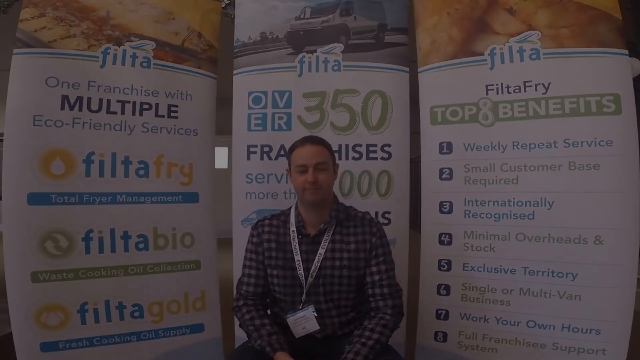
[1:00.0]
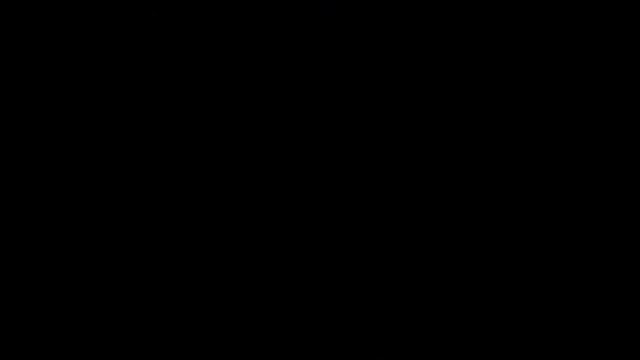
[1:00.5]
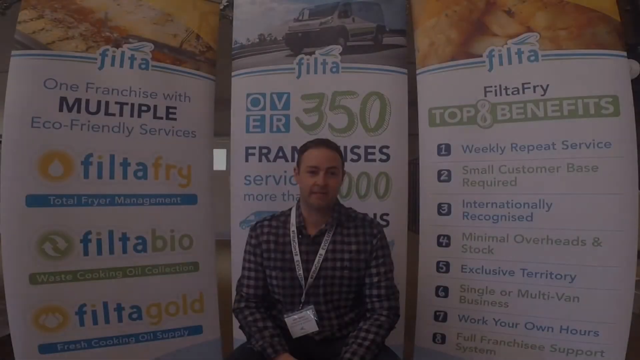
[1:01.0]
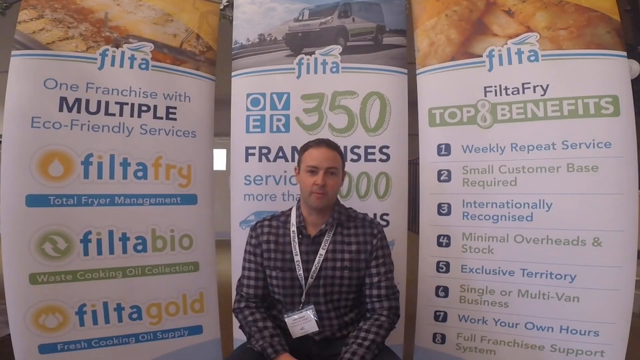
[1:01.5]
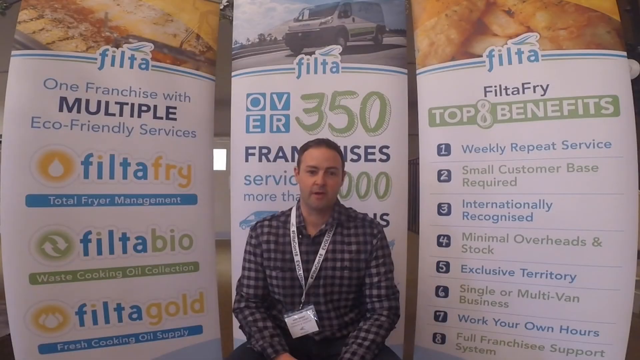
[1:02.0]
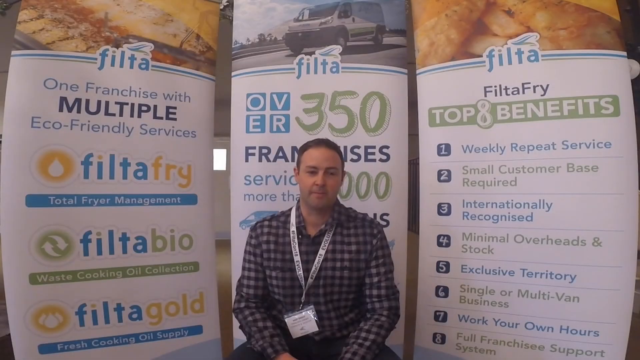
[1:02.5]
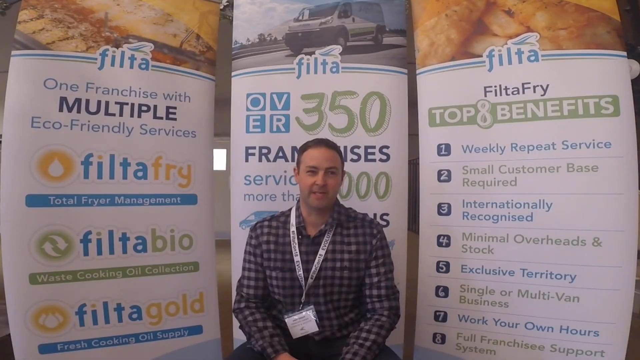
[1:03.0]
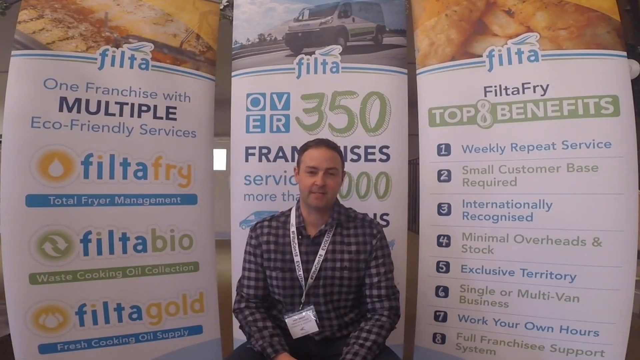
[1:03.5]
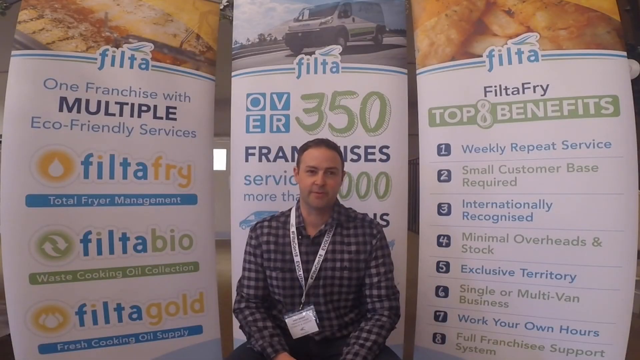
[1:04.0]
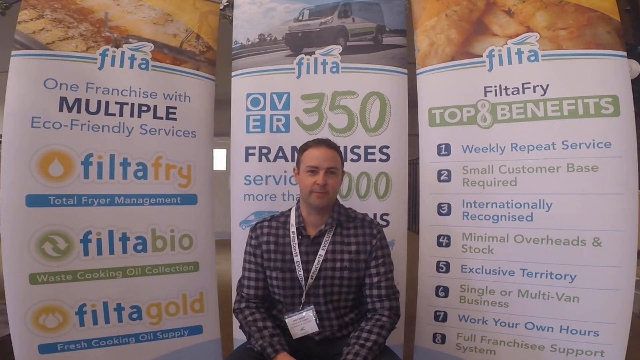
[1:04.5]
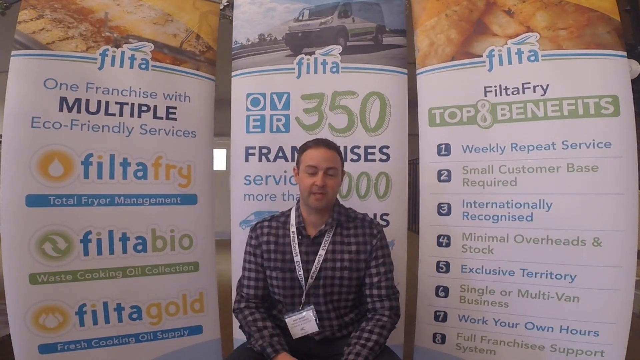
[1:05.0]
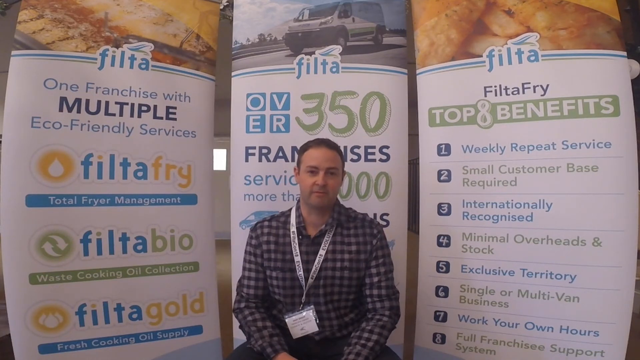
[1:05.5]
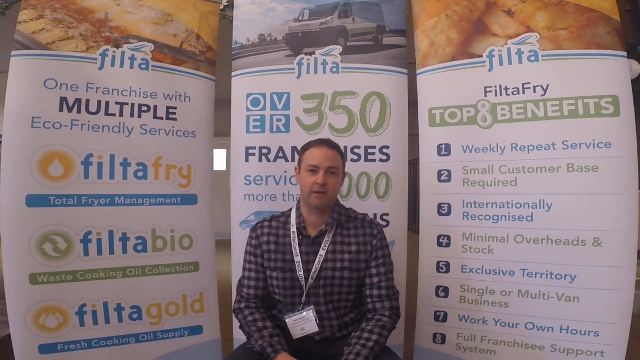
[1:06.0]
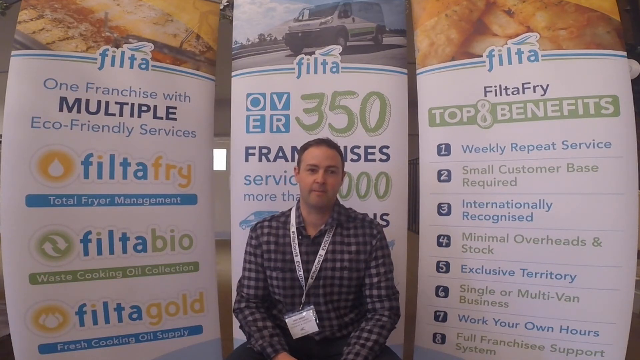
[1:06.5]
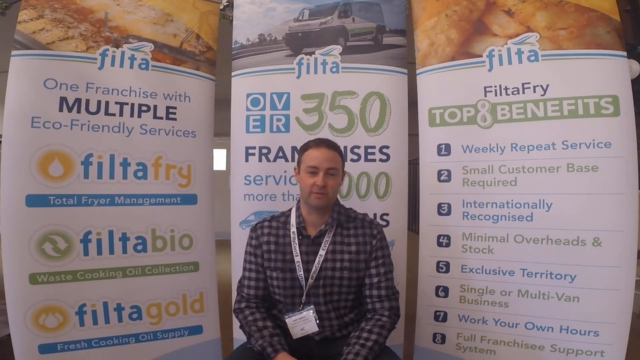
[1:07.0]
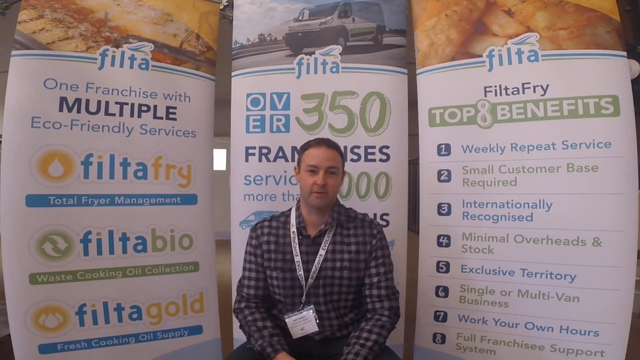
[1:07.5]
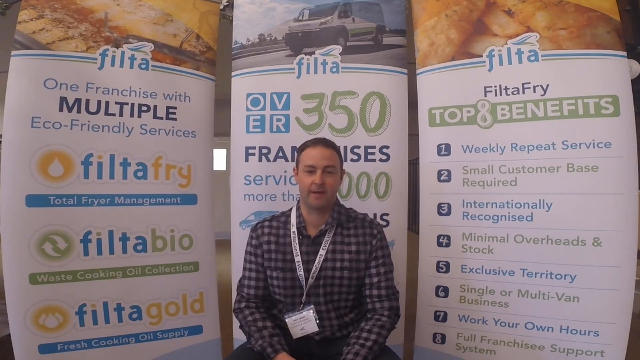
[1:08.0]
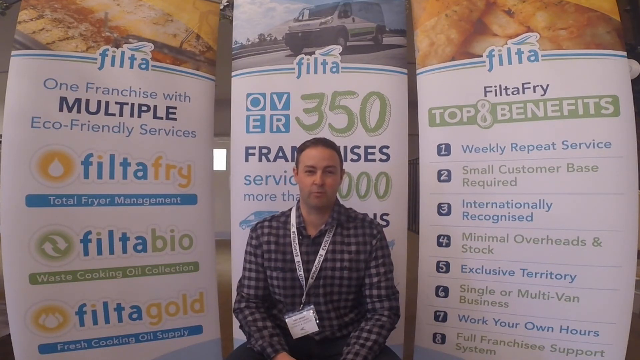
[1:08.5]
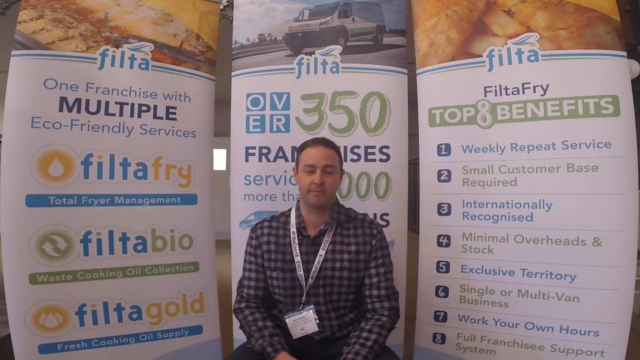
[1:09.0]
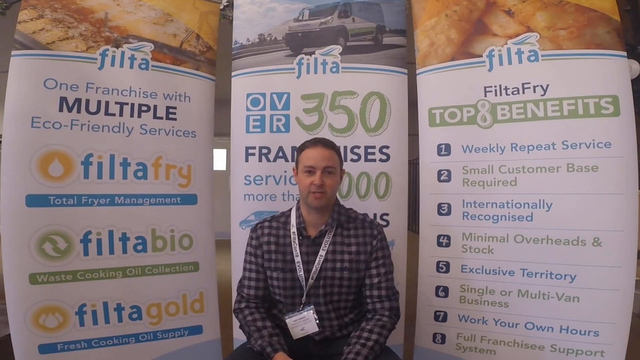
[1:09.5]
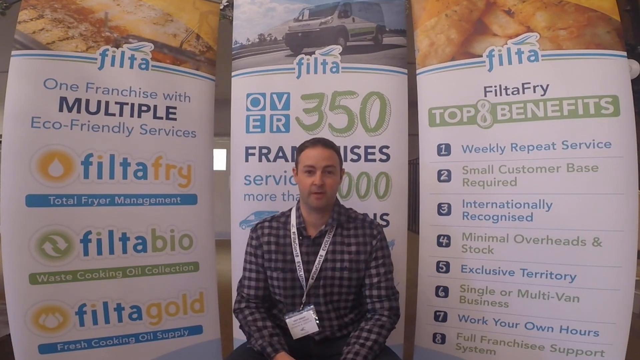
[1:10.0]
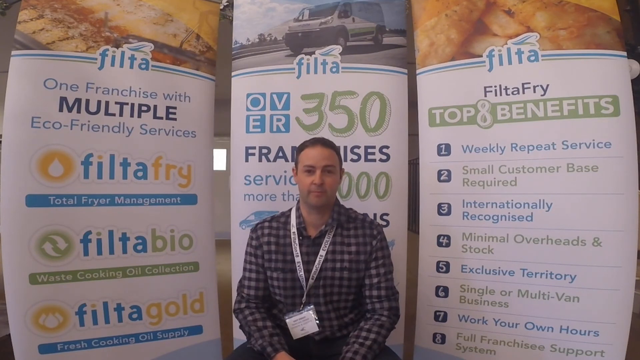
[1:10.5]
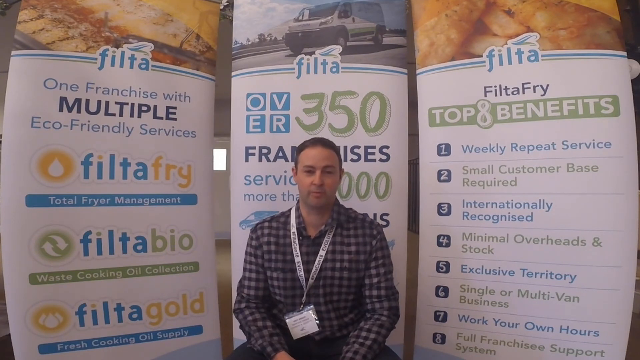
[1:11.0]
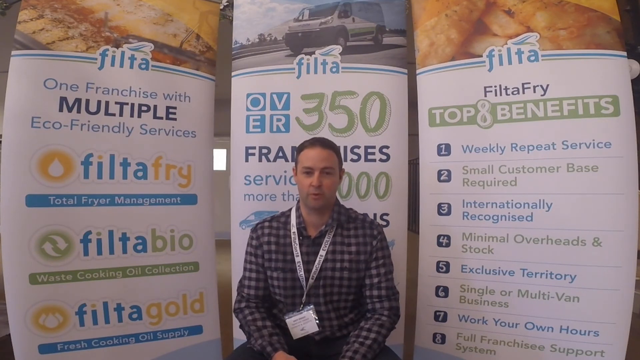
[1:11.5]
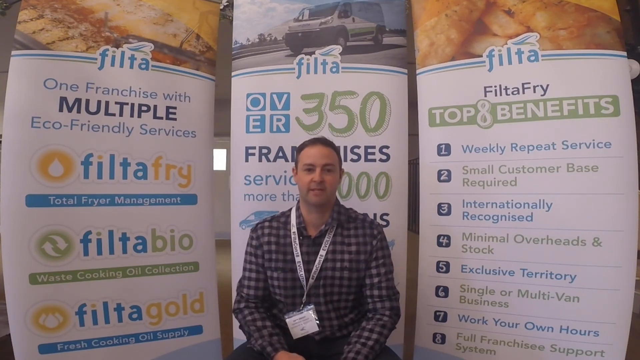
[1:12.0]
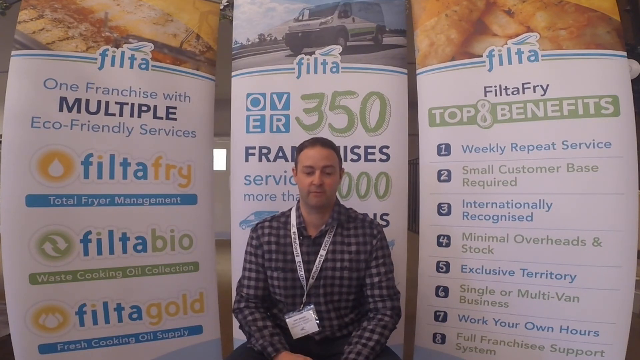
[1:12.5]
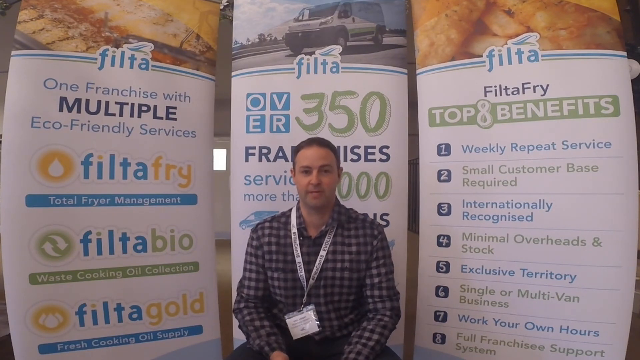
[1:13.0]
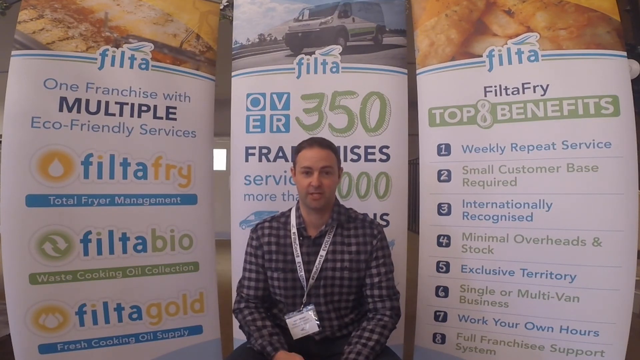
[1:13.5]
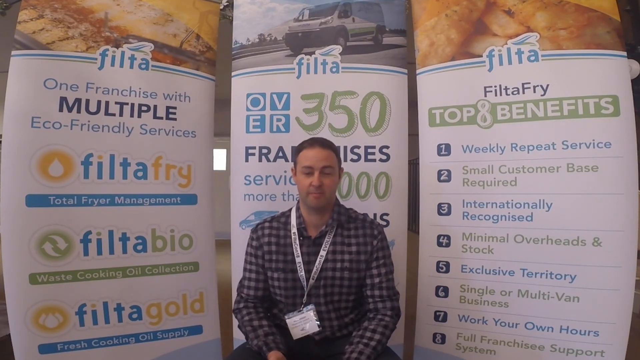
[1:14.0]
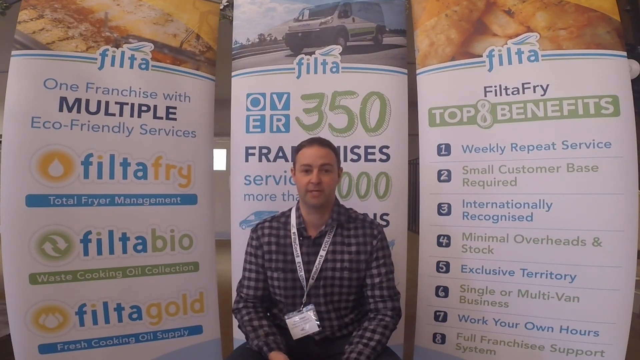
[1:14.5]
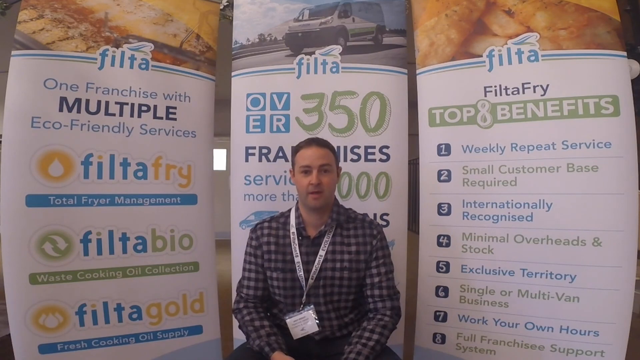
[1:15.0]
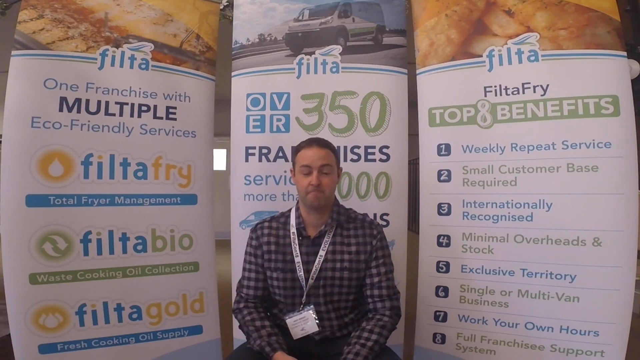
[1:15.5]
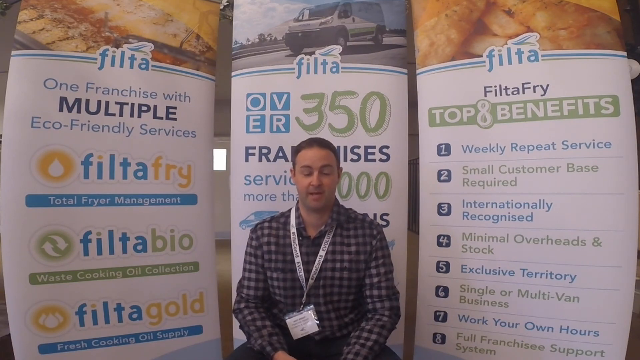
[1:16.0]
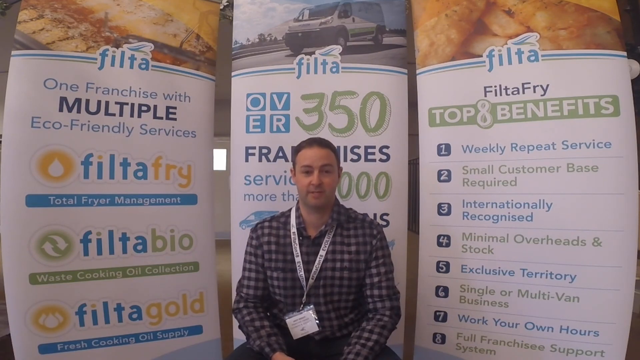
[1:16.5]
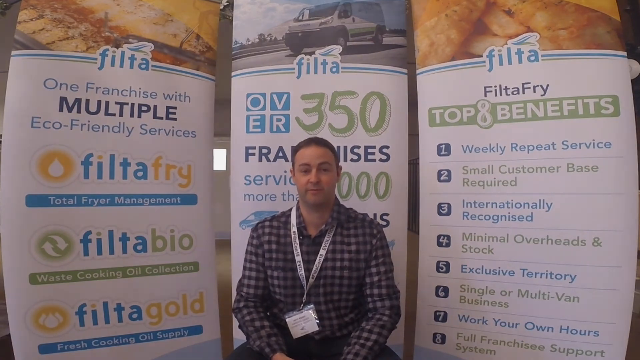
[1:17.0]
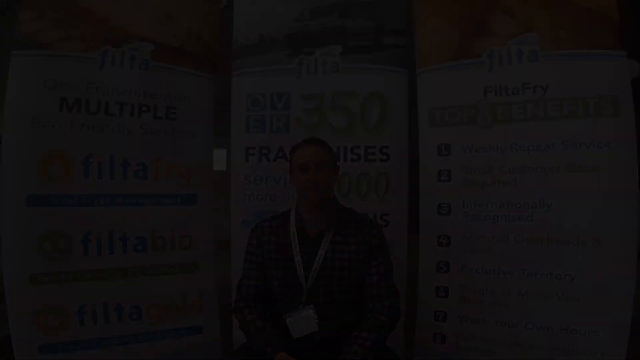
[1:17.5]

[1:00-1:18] It looks as if a transition is about to happen, but the video goes right back to the man sitting and talking, with nothing different. He sits in front of the banners, and the banner in the middle is blocked by him so it cannot be read.